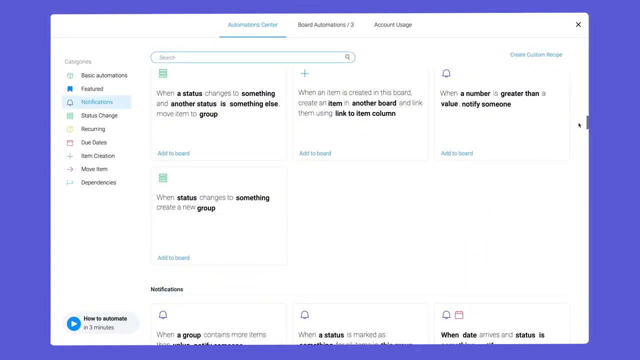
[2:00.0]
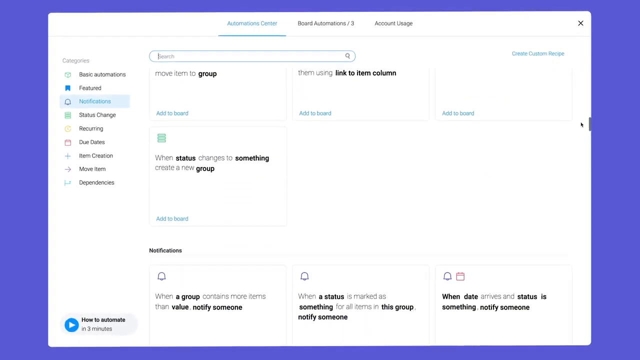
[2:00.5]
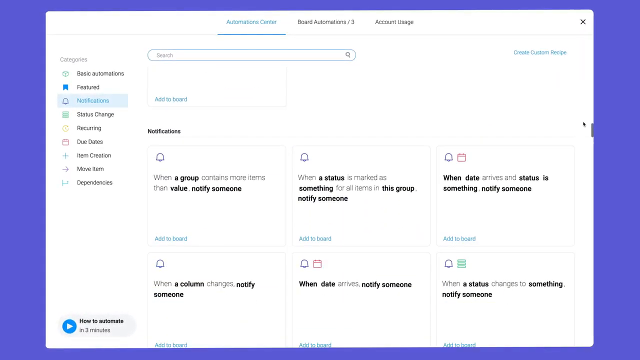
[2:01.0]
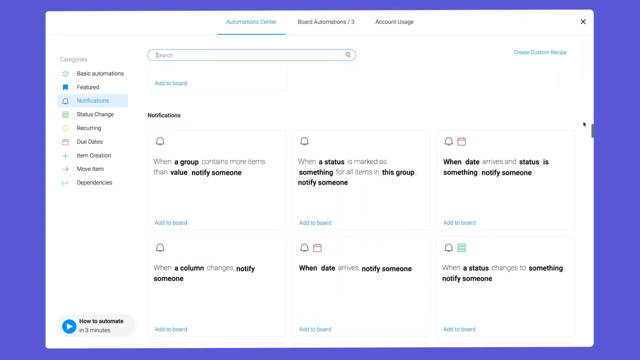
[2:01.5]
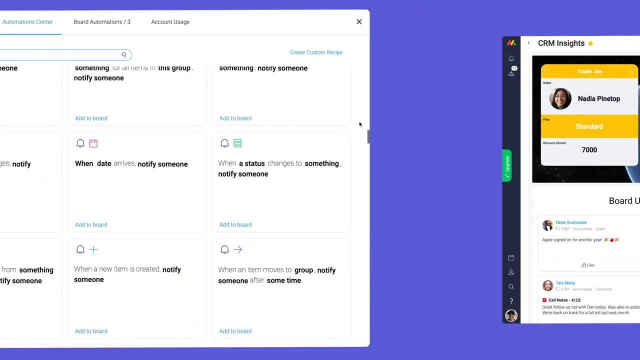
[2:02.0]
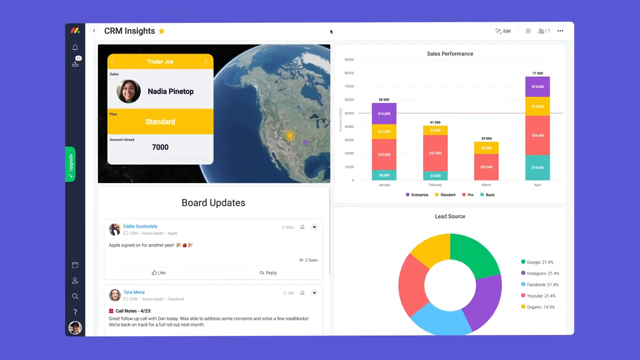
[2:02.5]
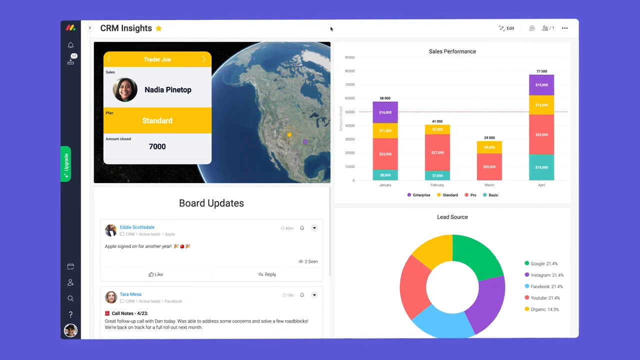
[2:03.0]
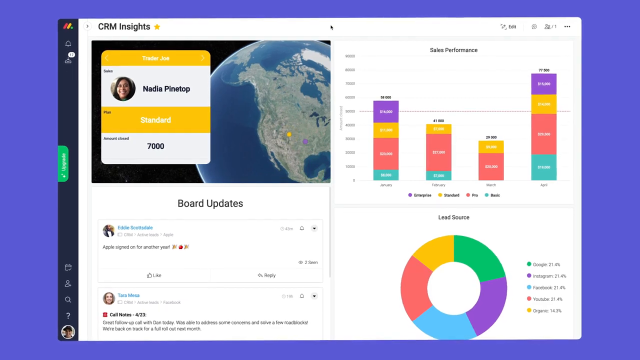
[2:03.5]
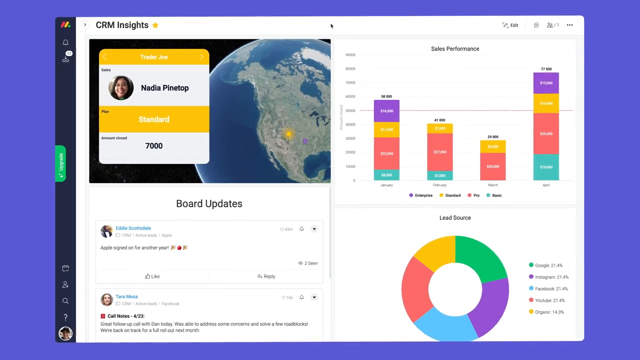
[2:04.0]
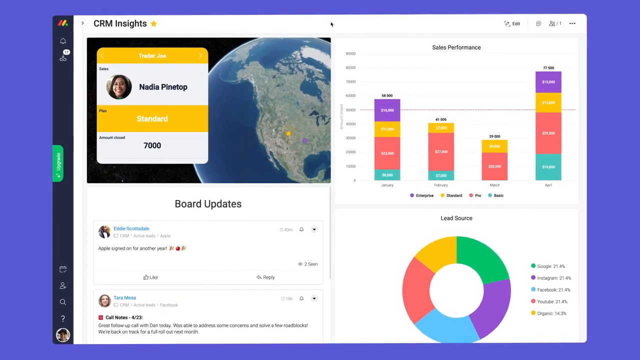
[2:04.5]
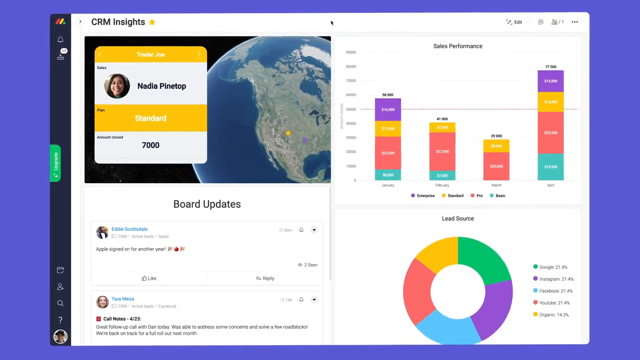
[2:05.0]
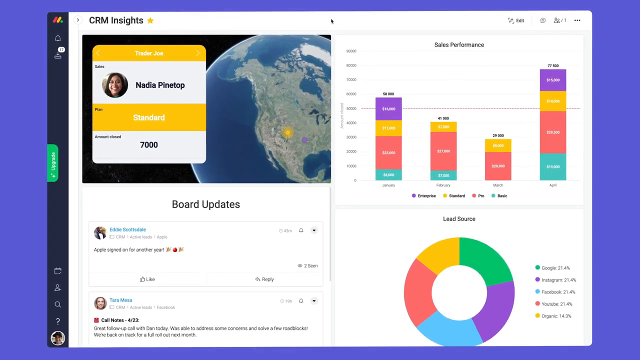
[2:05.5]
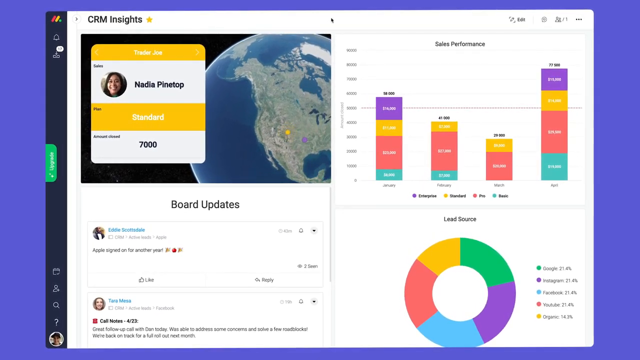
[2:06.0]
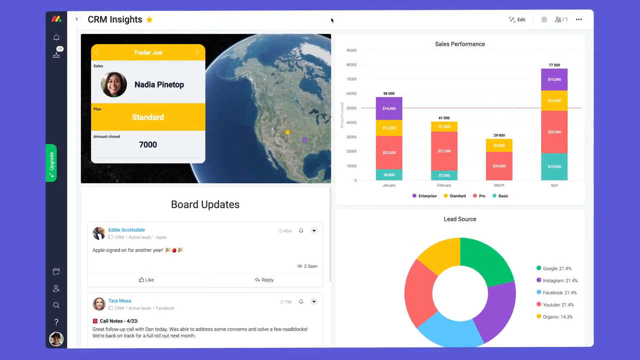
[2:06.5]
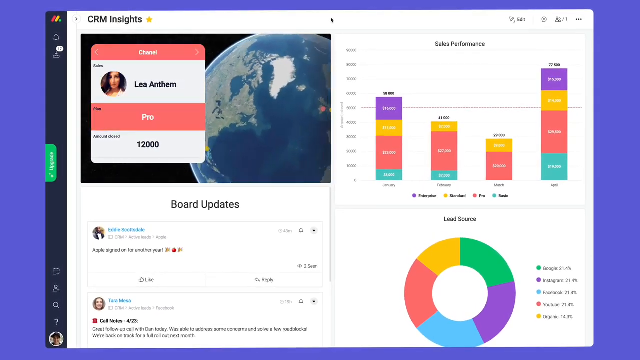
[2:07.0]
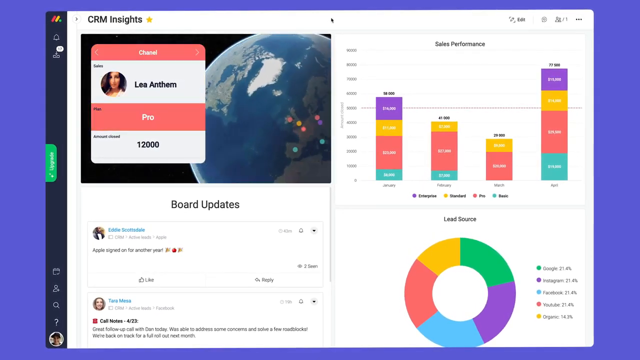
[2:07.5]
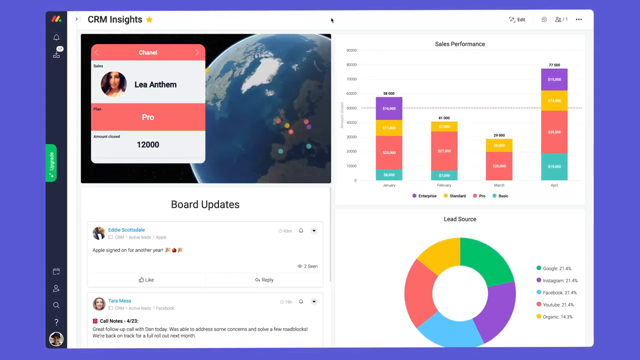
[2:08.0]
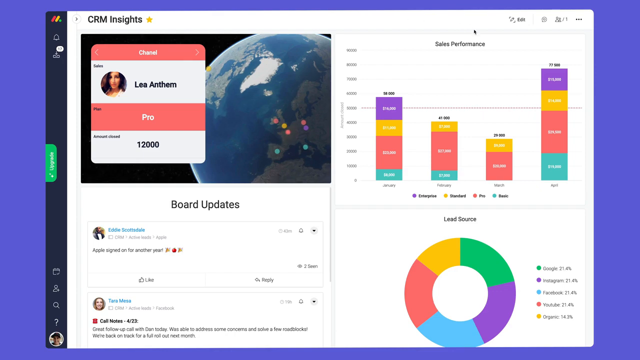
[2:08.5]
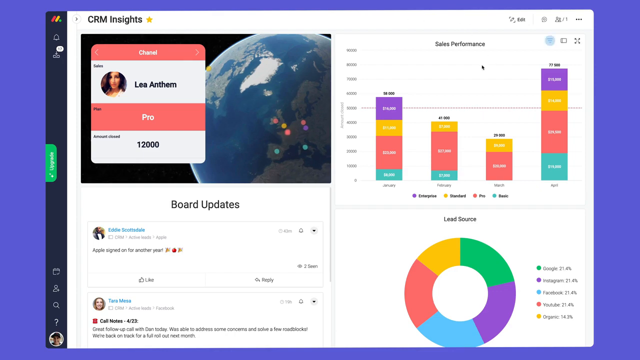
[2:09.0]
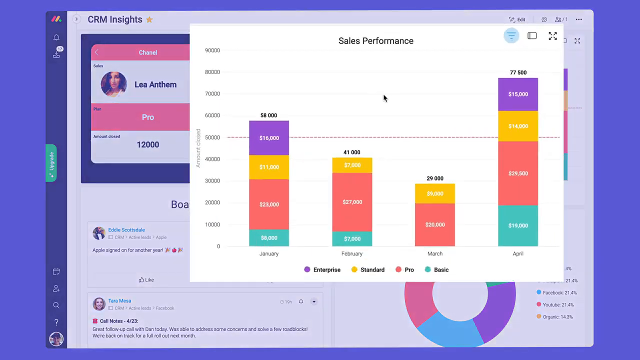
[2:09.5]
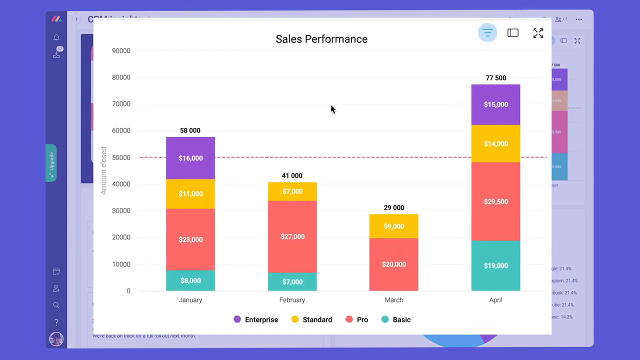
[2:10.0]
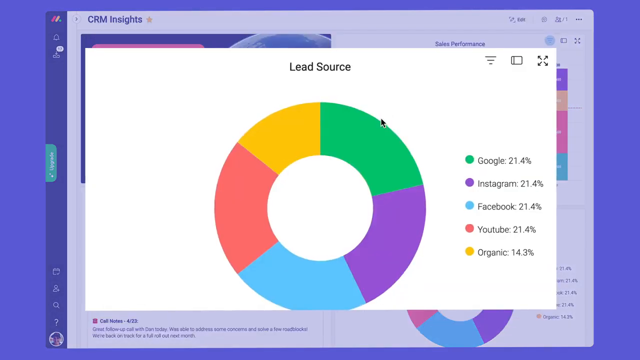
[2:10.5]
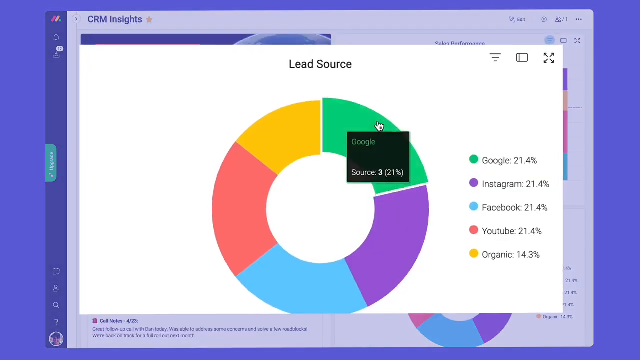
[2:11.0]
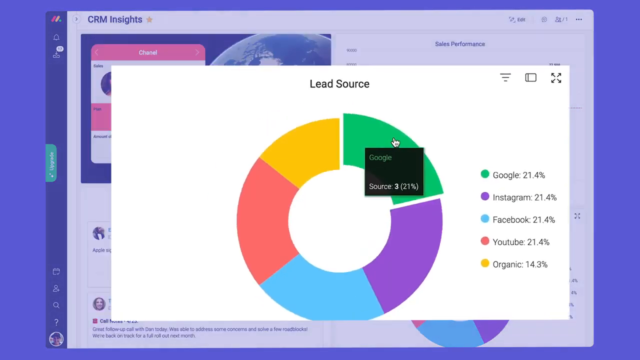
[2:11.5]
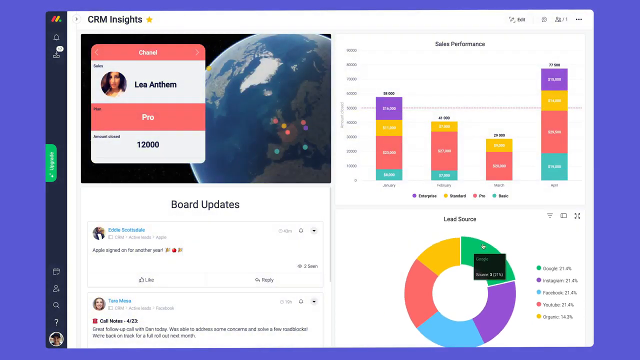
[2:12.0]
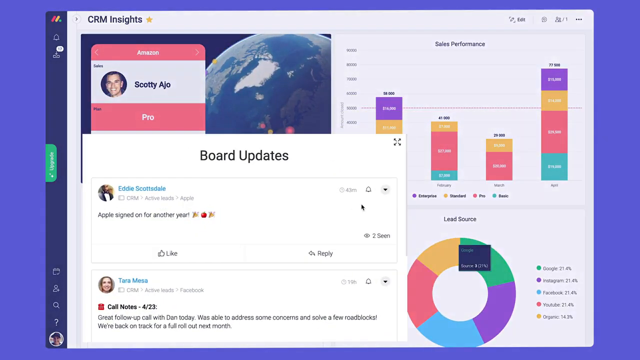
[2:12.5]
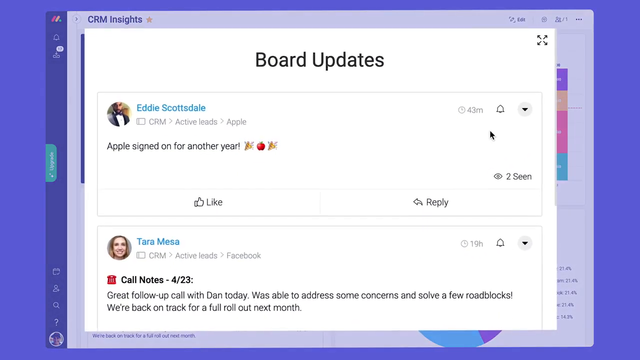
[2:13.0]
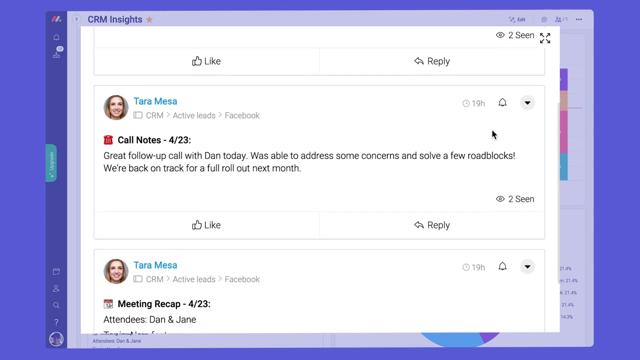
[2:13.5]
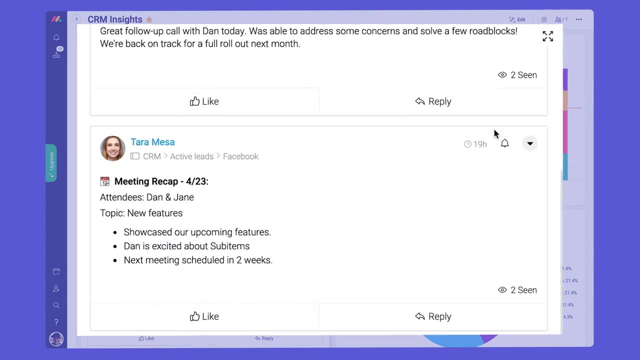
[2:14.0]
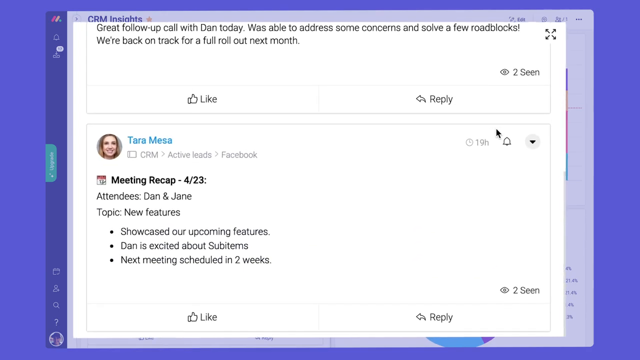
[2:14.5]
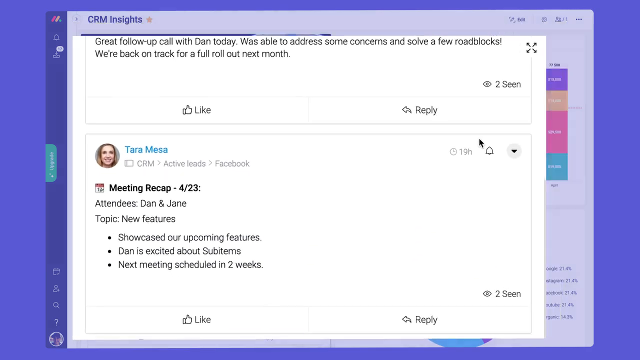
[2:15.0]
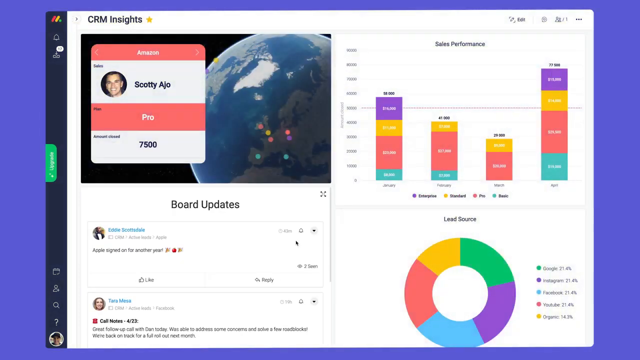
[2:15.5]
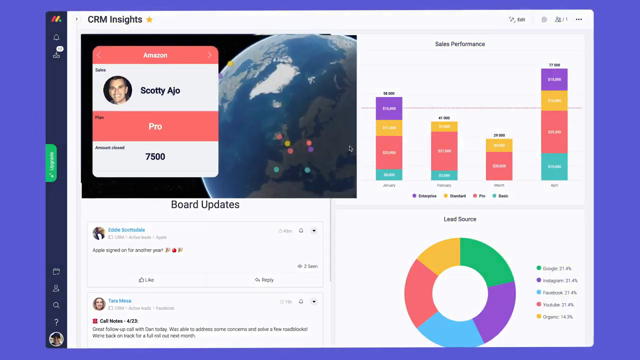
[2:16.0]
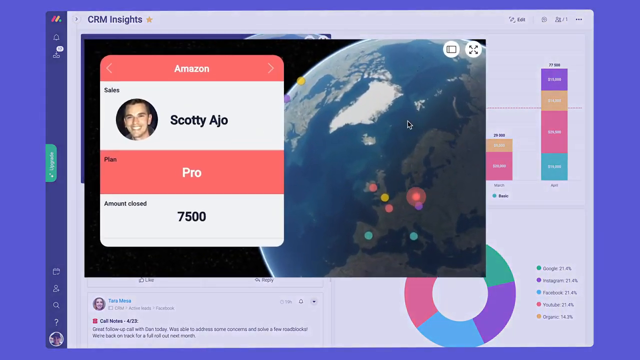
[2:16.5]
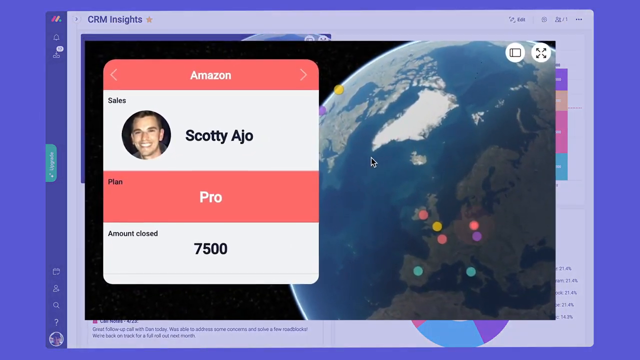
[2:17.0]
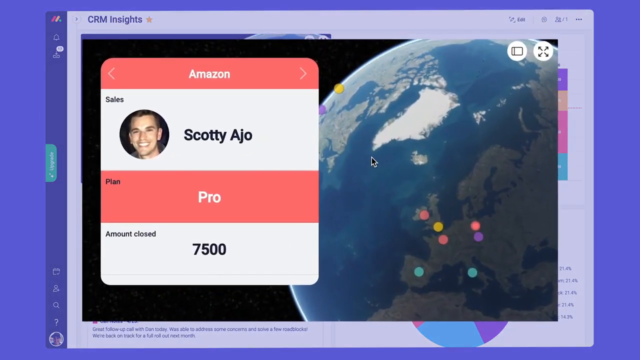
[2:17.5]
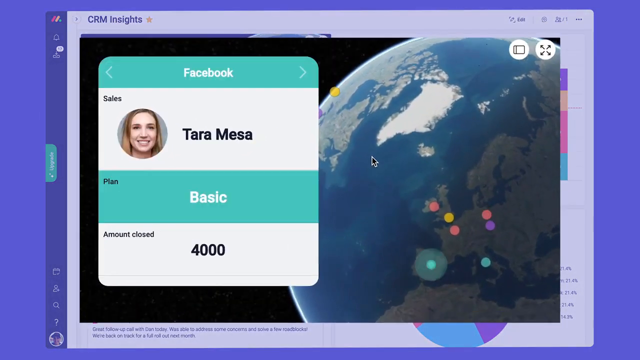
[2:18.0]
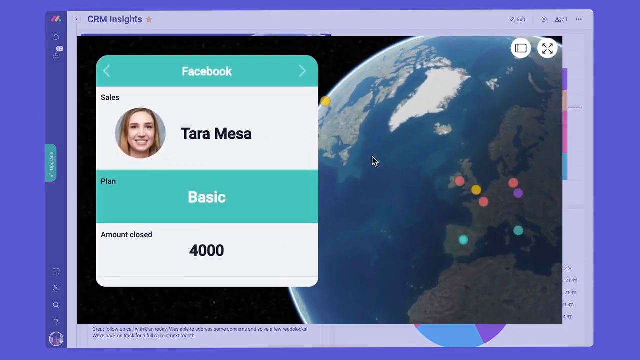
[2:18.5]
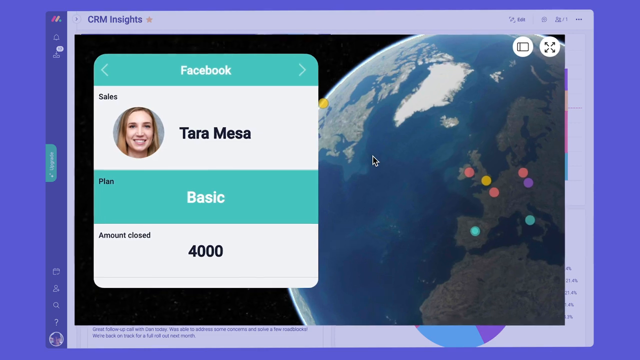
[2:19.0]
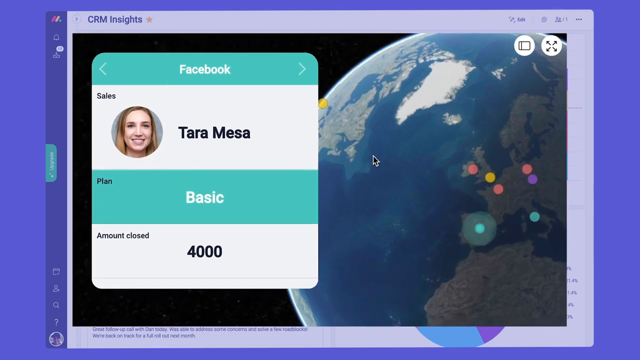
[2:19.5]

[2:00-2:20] The person using the computer scrolls down the page, then pulls up another part of the CRM Insights Program. In the top left-hand corner of this page is a rectangular box containing an image of the planet Earth seen from space. To the left of the planet is a smaller box with yellow and white stripes and a profile picture inside it, and at the bottom it says "7000." Underneath this rectangular area it says "Board Updates." On the right-hand side are four different bar graphs and a circle graph in red, yellow, green, purple, and blue. The video zooms slowly in on them, and the Earth is turning at the top left-hand side. The cursor pulls up the different bar graphs, then the board updates pop-up so it can be seen clearly, and also the Earth pop-up.